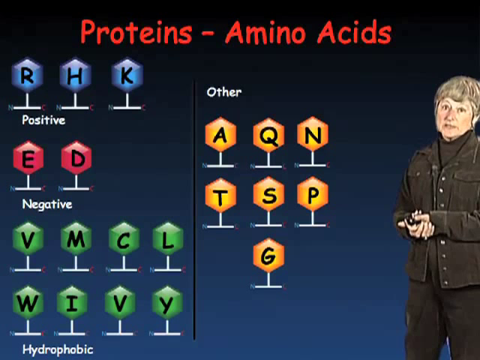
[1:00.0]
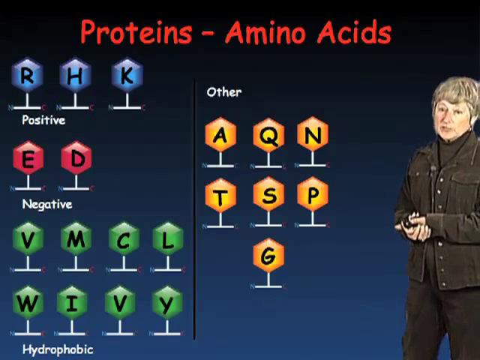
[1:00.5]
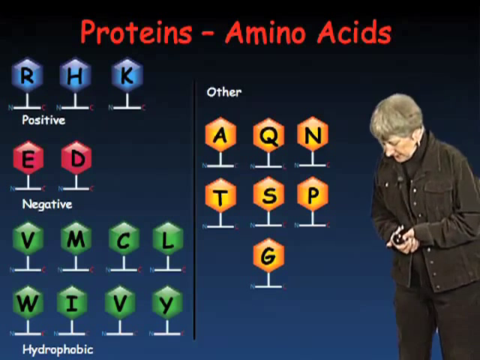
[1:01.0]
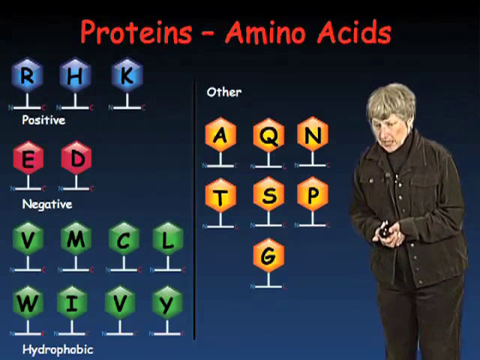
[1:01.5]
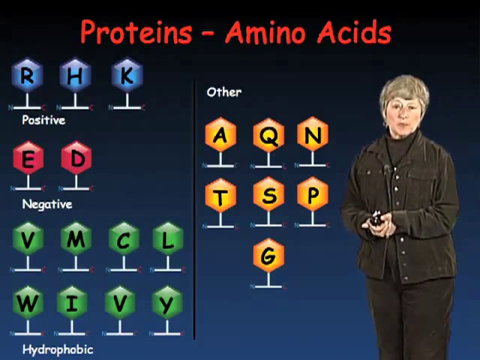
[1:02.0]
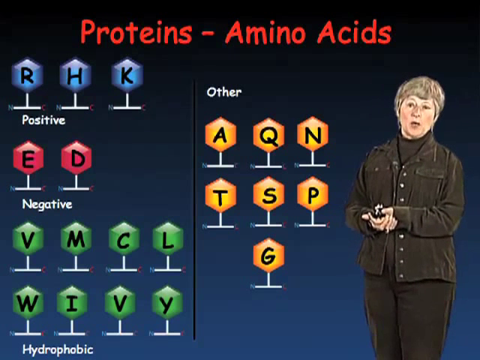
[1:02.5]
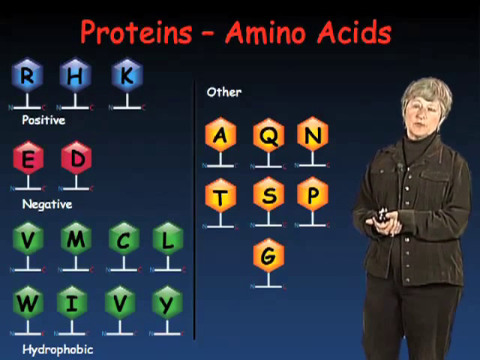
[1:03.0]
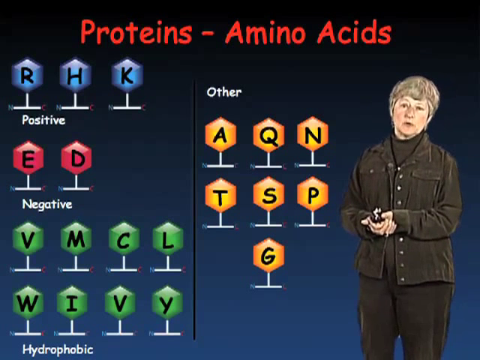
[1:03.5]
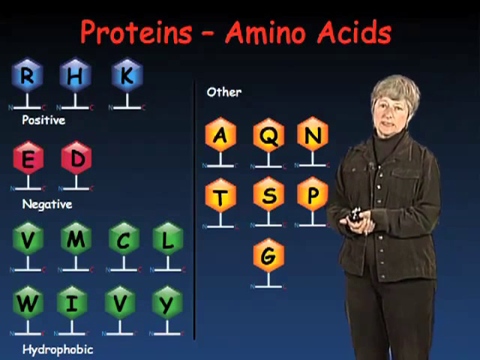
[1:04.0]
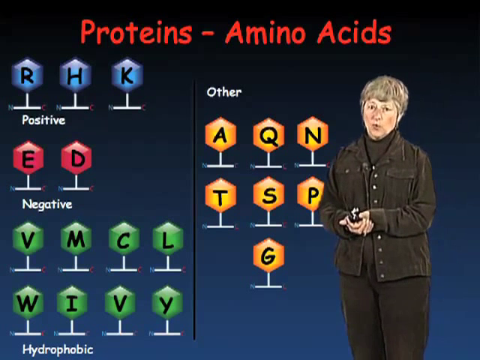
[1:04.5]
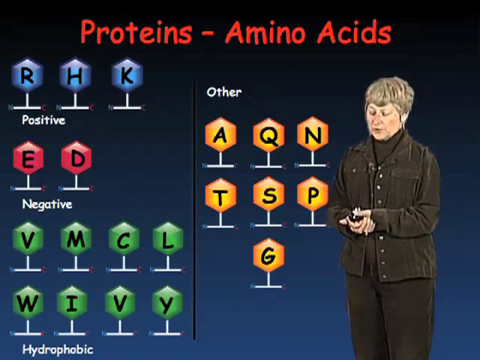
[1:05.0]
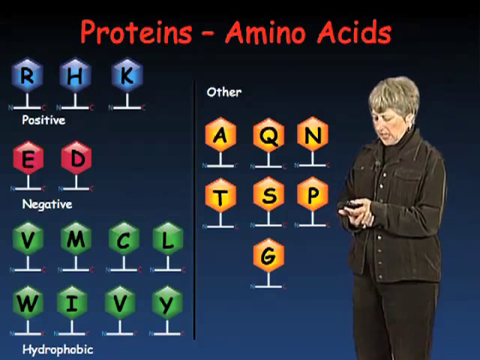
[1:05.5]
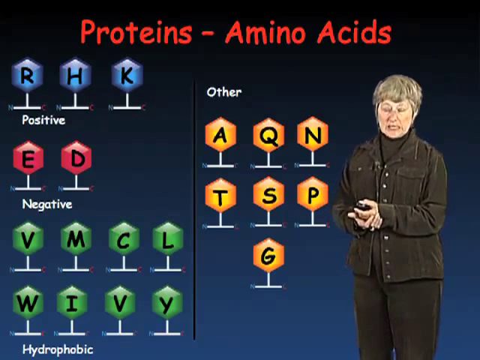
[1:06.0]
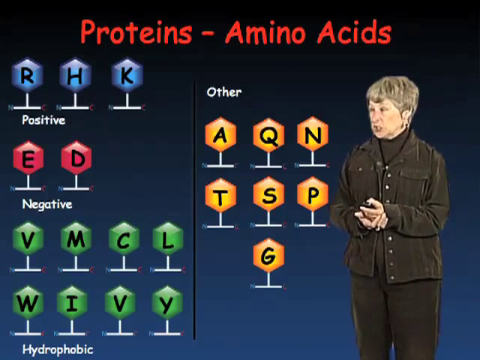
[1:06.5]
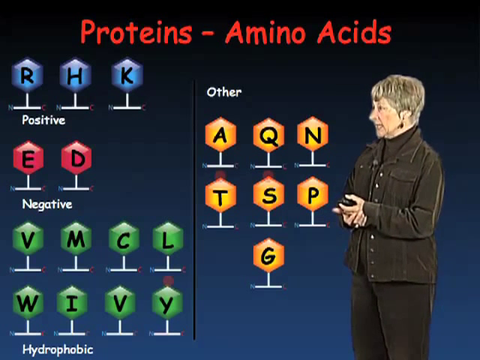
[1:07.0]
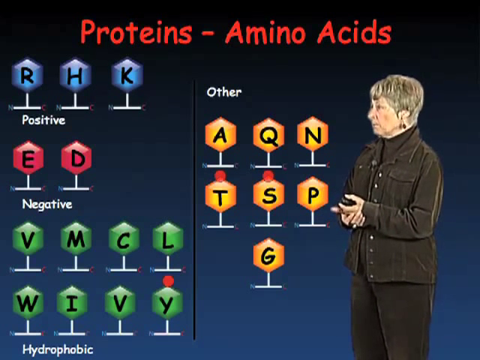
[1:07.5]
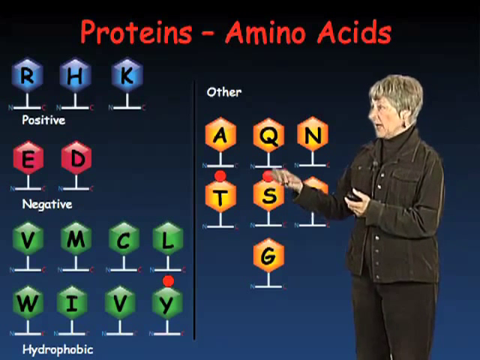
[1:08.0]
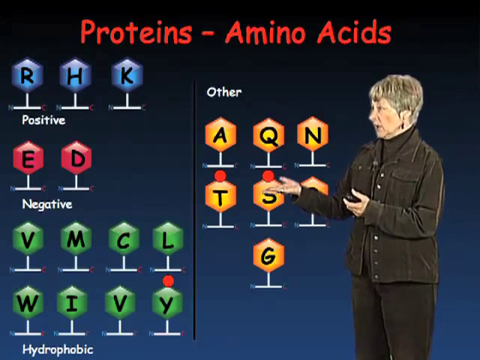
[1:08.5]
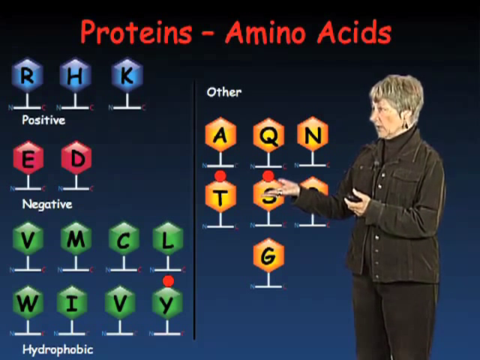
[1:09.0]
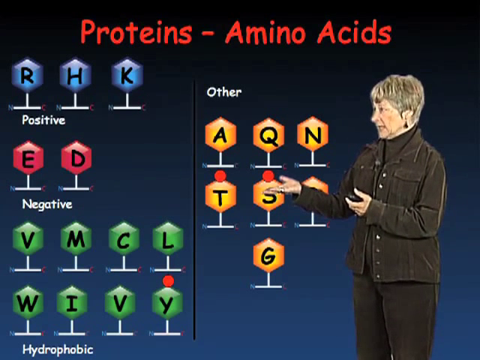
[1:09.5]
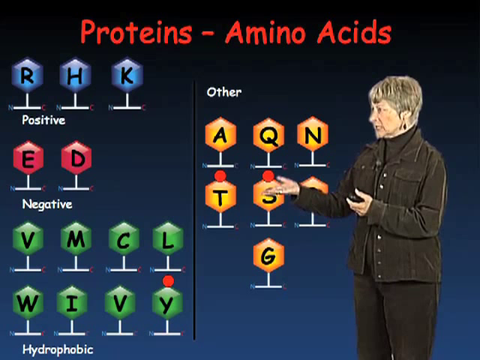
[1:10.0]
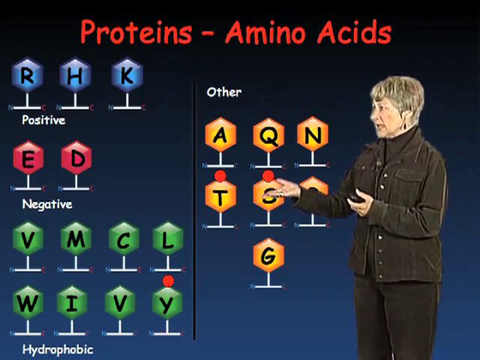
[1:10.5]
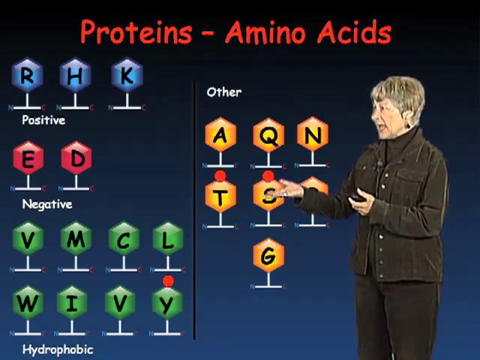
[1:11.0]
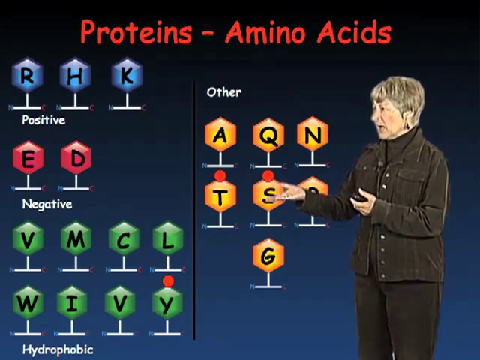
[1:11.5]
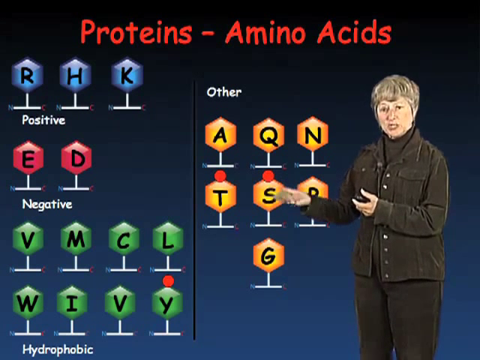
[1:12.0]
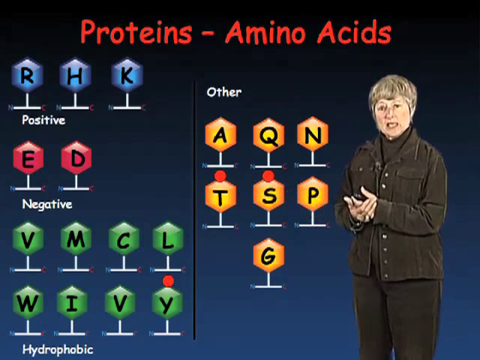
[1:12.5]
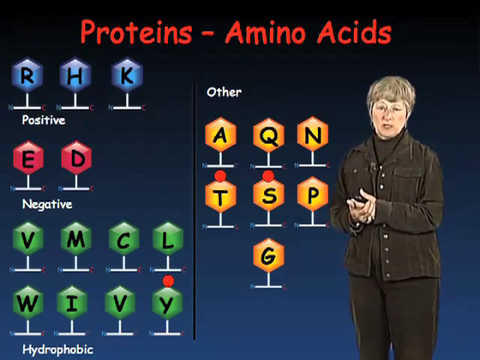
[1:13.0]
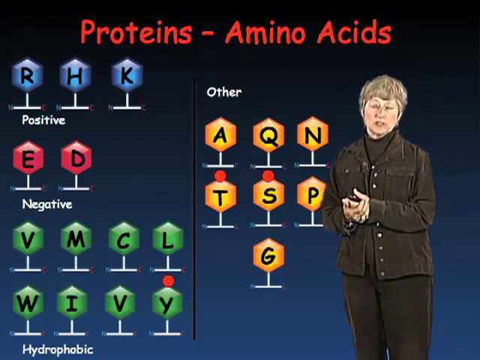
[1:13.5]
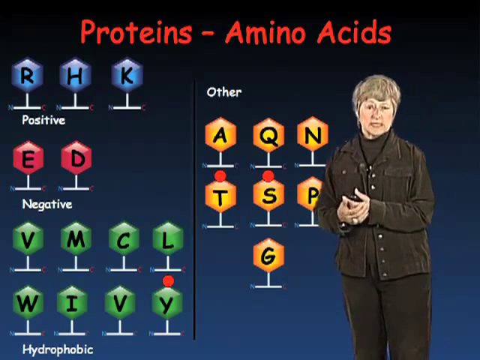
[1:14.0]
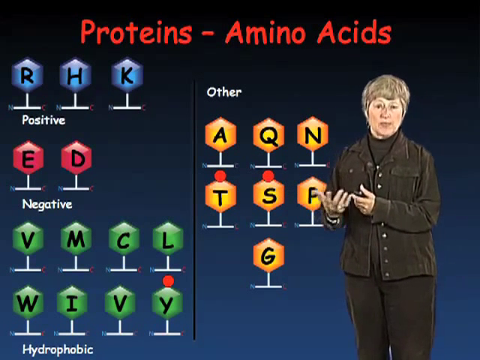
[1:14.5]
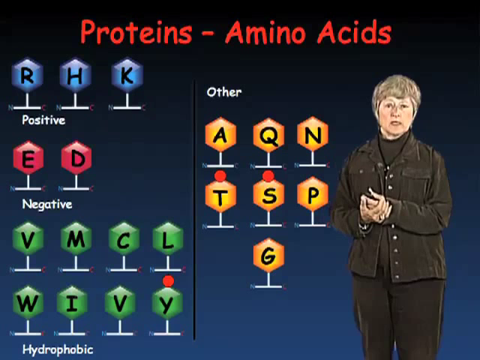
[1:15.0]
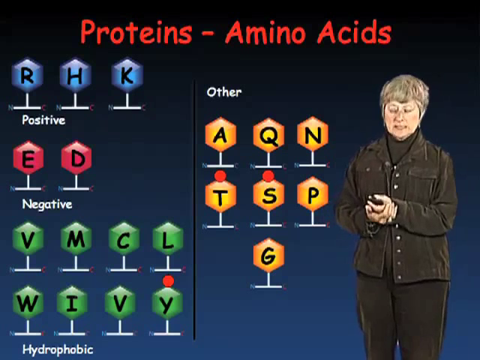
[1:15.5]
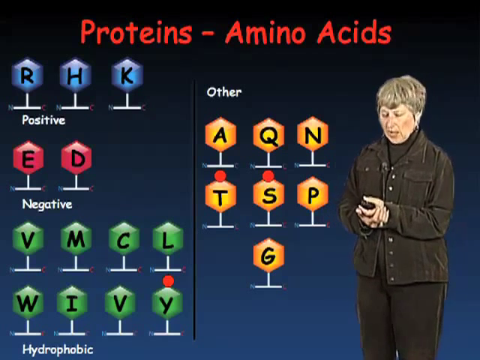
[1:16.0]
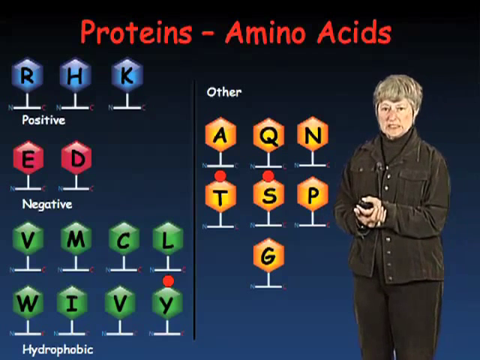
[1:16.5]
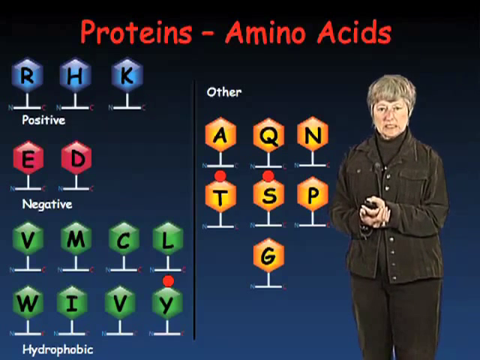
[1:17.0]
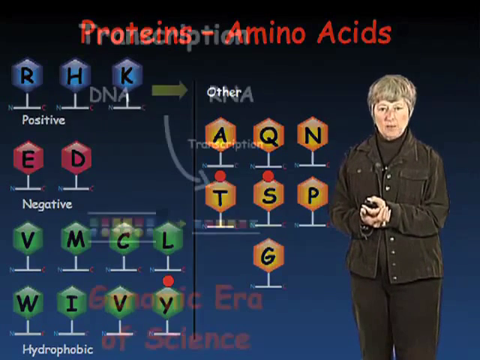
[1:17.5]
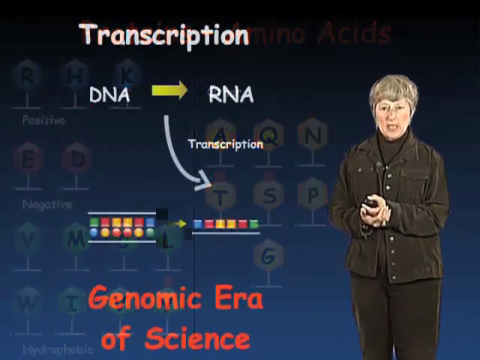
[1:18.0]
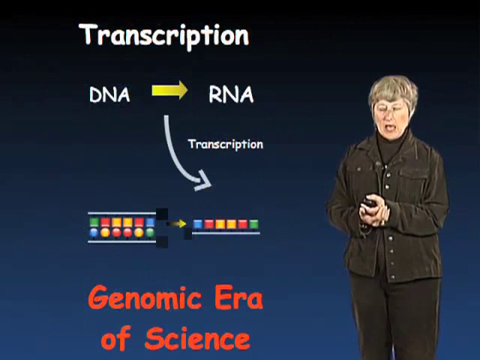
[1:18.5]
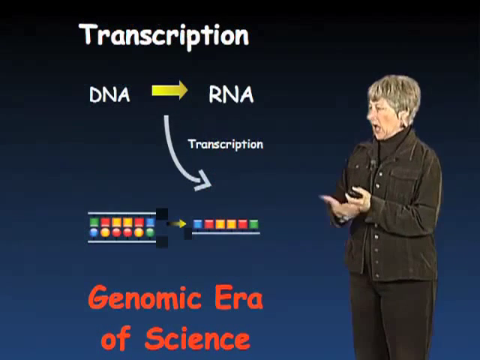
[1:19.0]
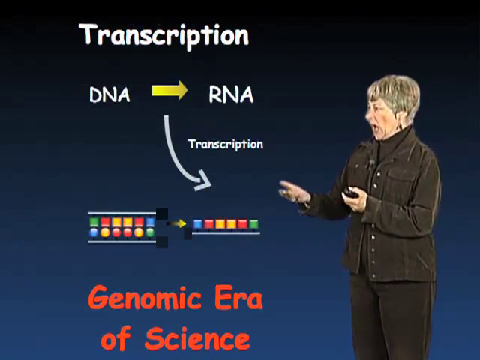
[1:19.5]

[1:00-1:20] A woman with short gray hair, dressed in a gray top, pants and a gray turtleneck, is in the bottom right corner of the screen. She holds a clicker in her left hand, and her left hand is held by her right hand. The top of the screen reads "proteins-amino acids," with positive, negative and other represented by colored symbols. Next, a screen shows "transcription" in white text at the top, then "DNA" to "RNA" with a curving arrow pointing to the right and "transcription" in small letters above it. A set of colored objects in two tiers has an arrow pointing to colored objects in only one layer. The bottom of the screen says "genomic era." The screen then switches to the text "proteins-amino acids" with blue, red, green and yellow symbols representing positive, negative and other, while the woman continues speaking in the bottom right corner.